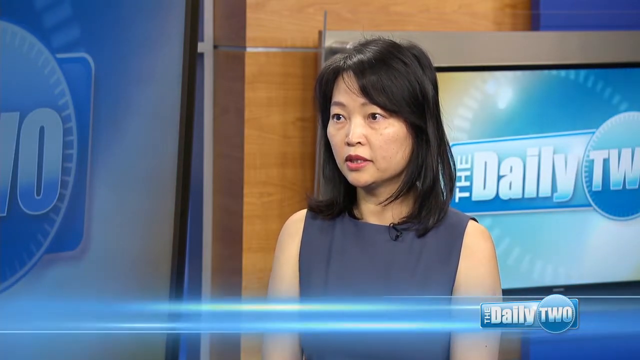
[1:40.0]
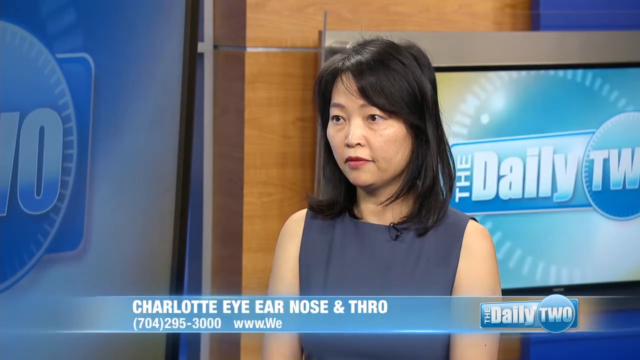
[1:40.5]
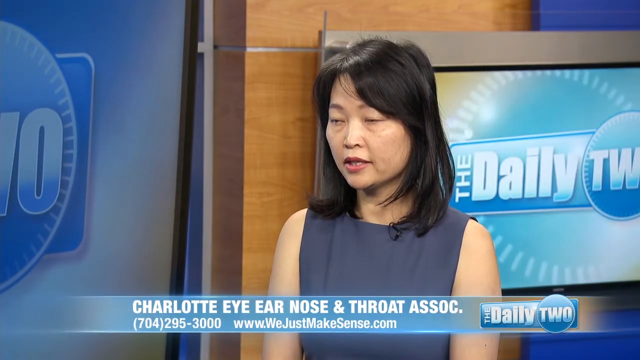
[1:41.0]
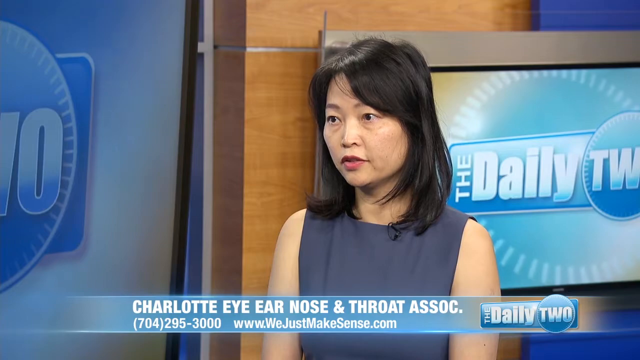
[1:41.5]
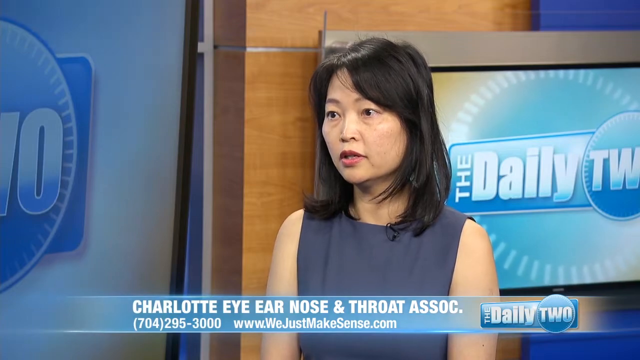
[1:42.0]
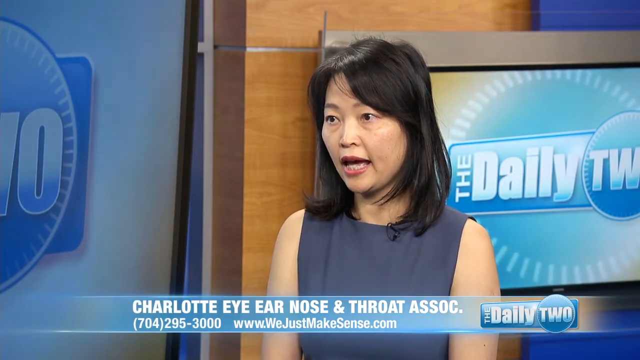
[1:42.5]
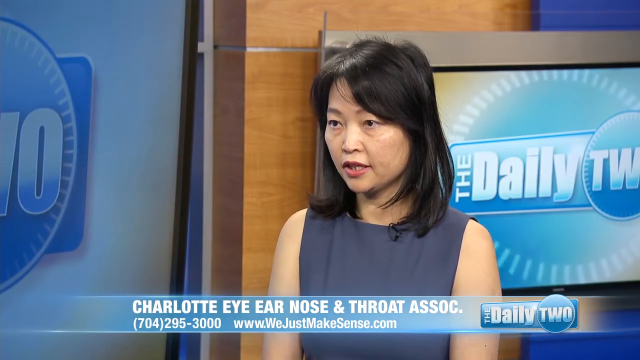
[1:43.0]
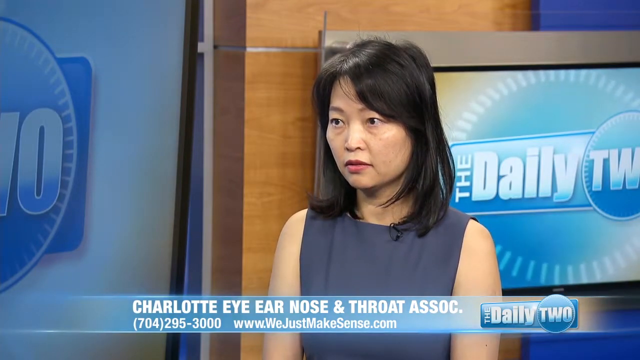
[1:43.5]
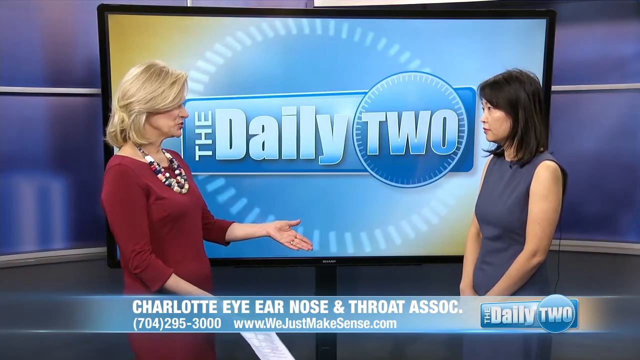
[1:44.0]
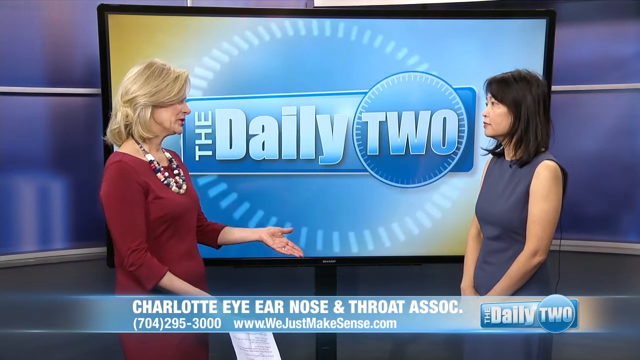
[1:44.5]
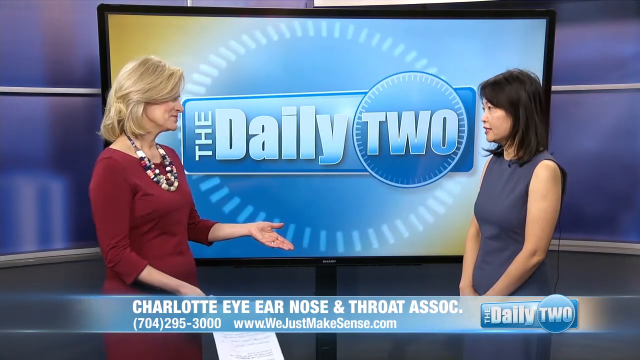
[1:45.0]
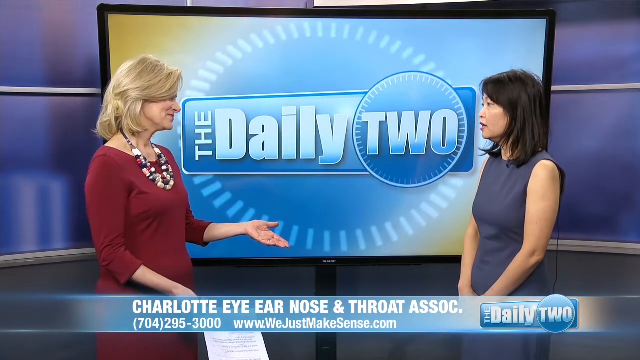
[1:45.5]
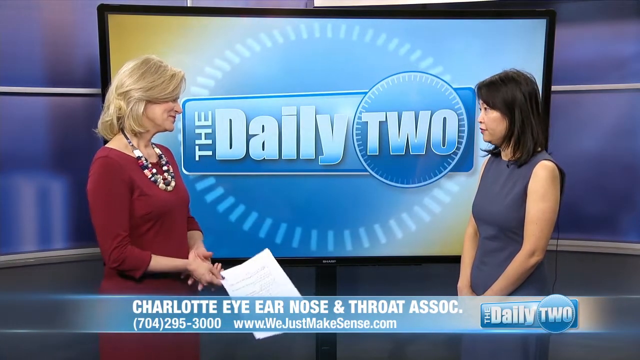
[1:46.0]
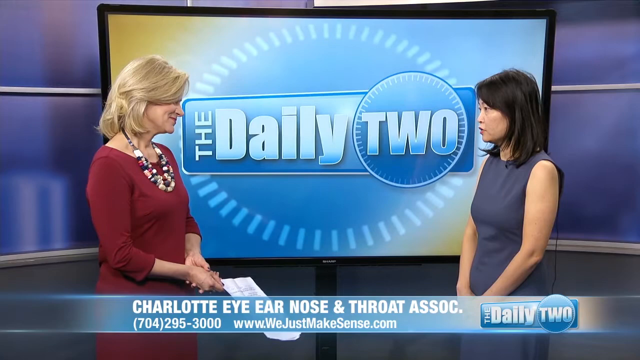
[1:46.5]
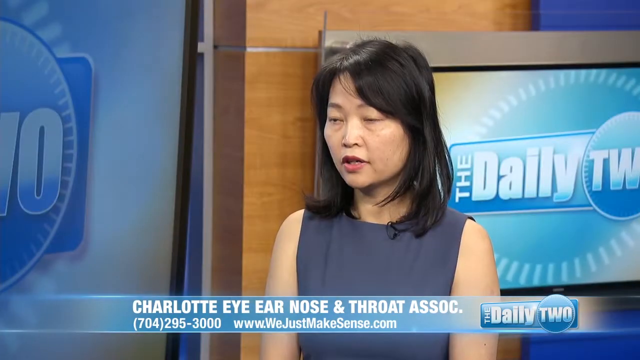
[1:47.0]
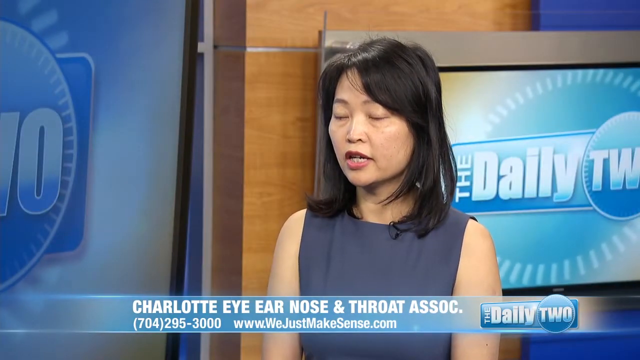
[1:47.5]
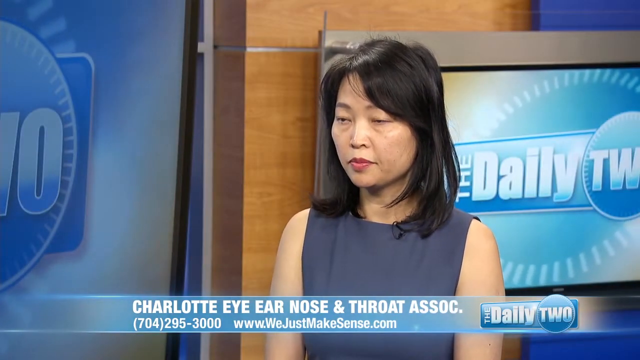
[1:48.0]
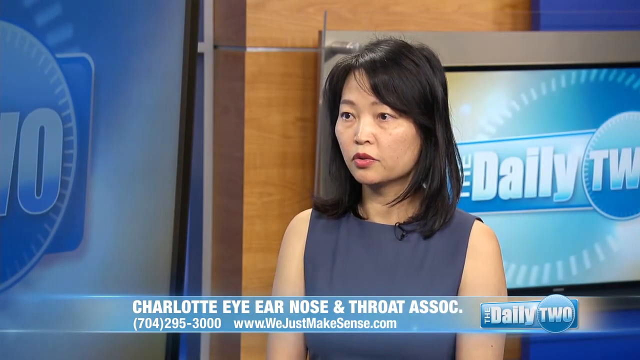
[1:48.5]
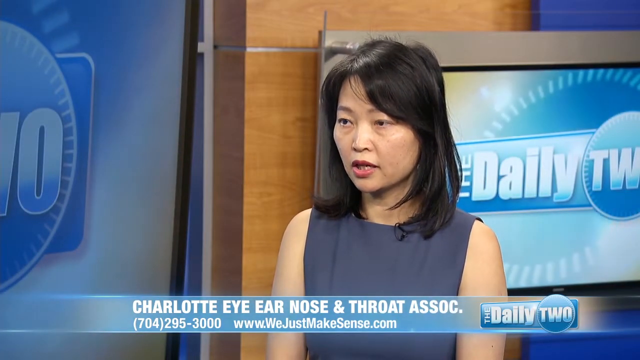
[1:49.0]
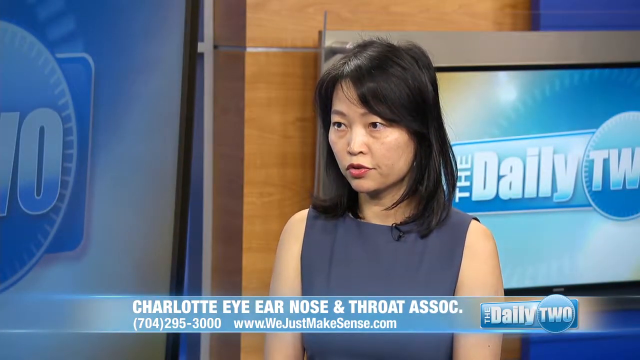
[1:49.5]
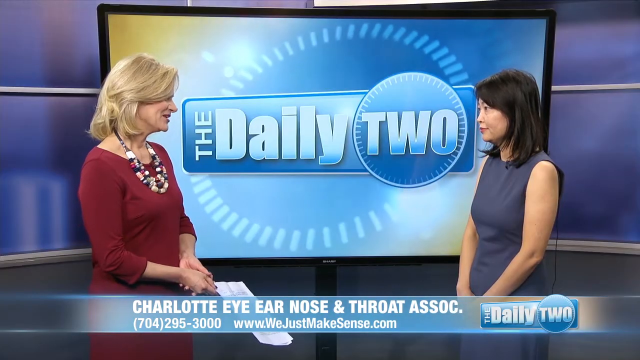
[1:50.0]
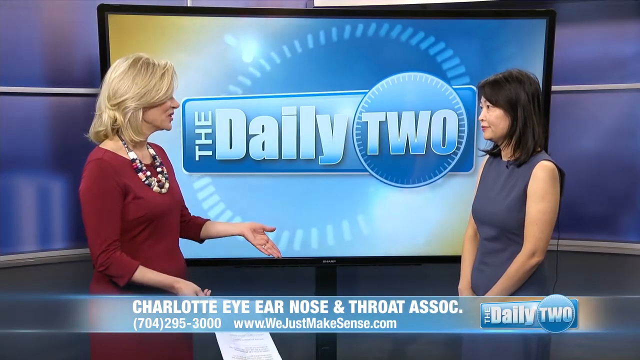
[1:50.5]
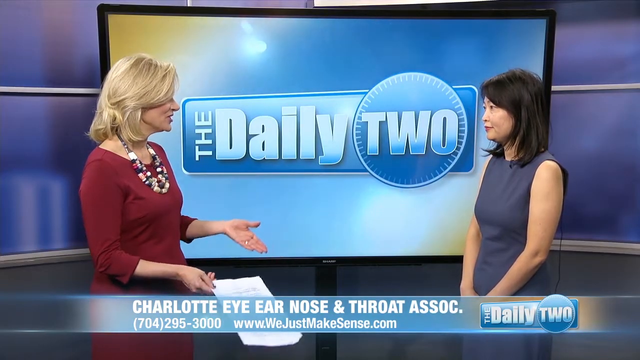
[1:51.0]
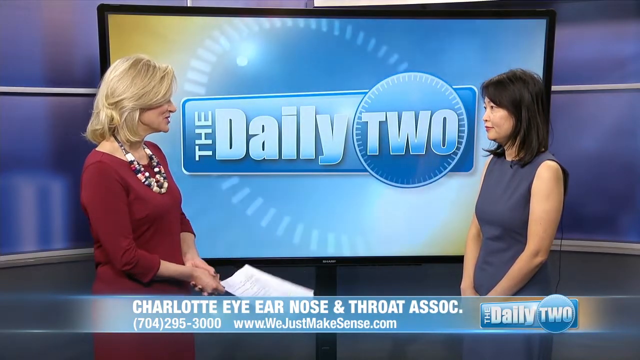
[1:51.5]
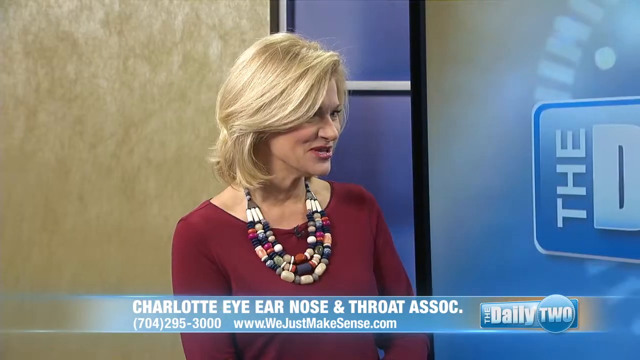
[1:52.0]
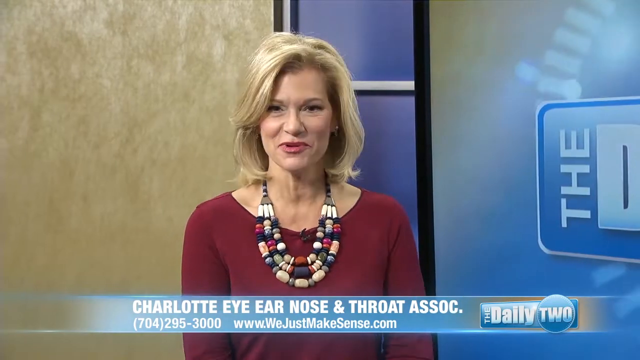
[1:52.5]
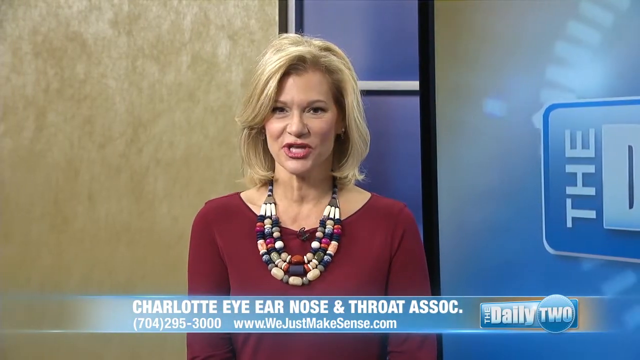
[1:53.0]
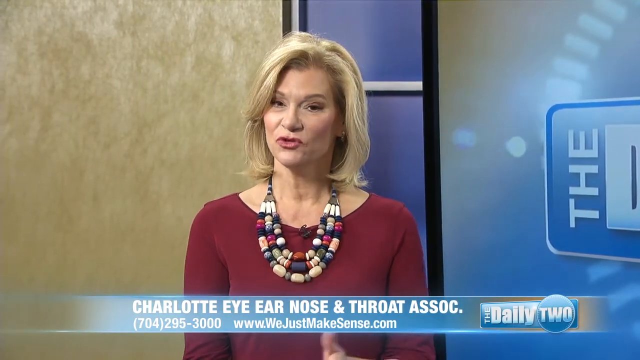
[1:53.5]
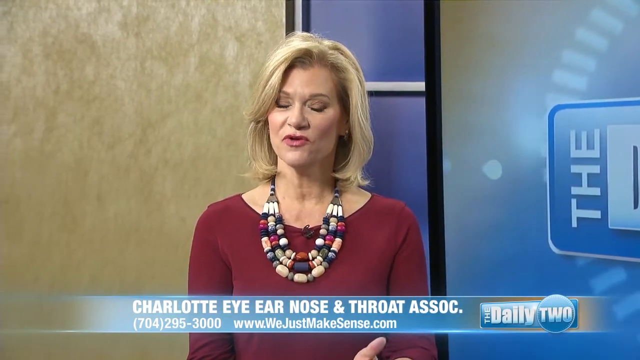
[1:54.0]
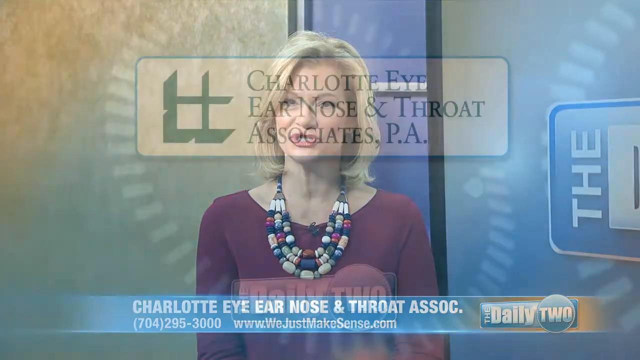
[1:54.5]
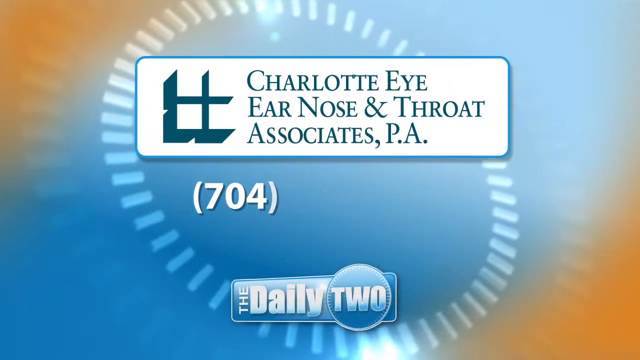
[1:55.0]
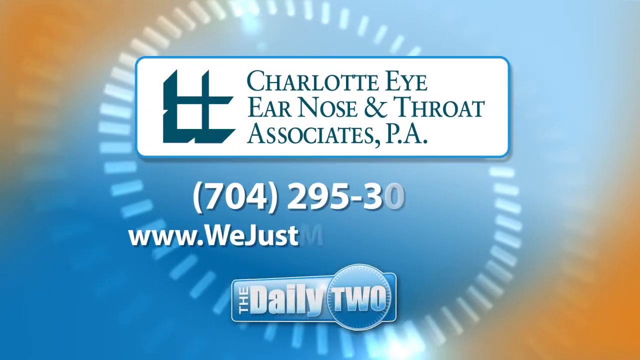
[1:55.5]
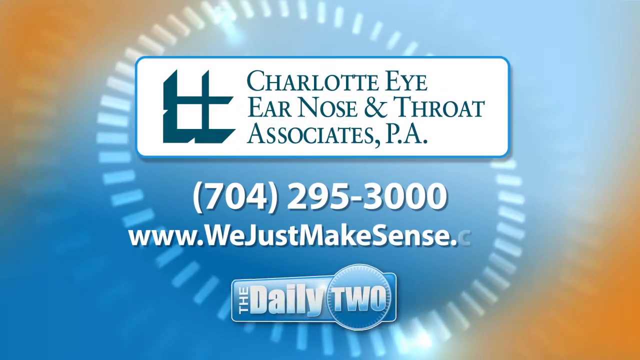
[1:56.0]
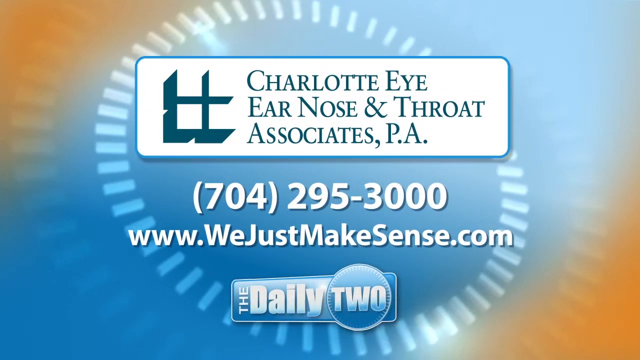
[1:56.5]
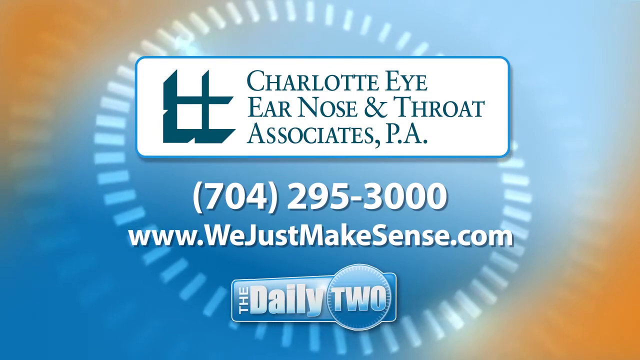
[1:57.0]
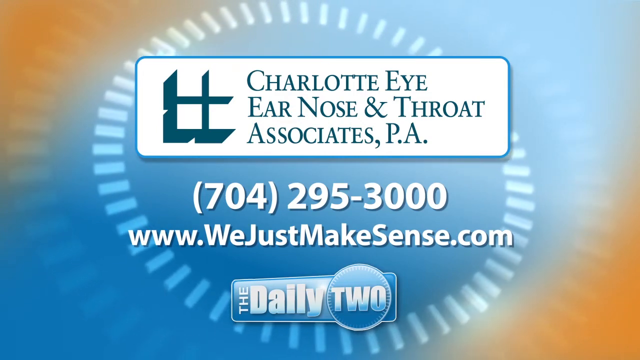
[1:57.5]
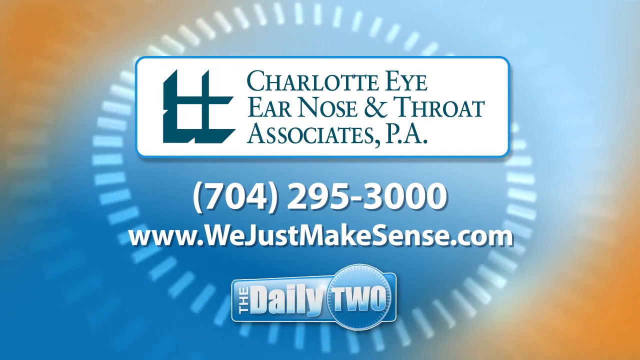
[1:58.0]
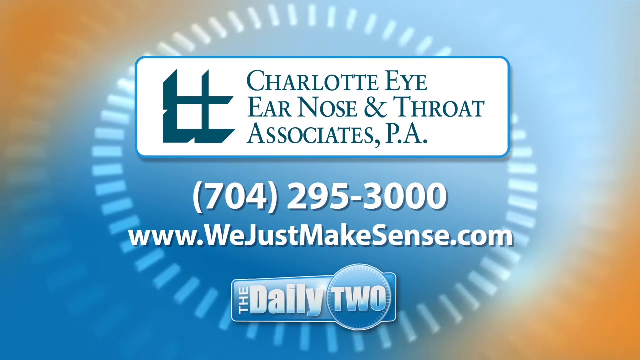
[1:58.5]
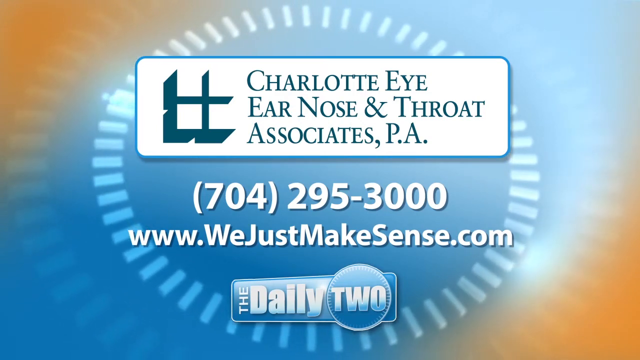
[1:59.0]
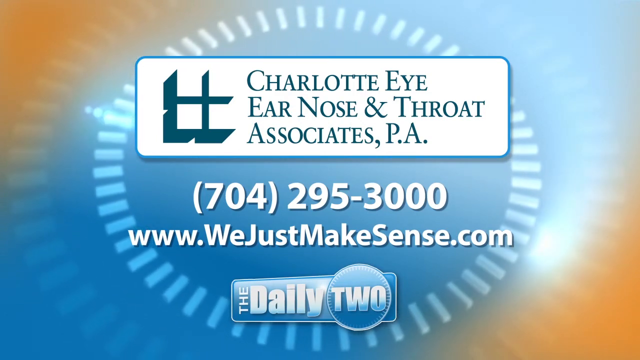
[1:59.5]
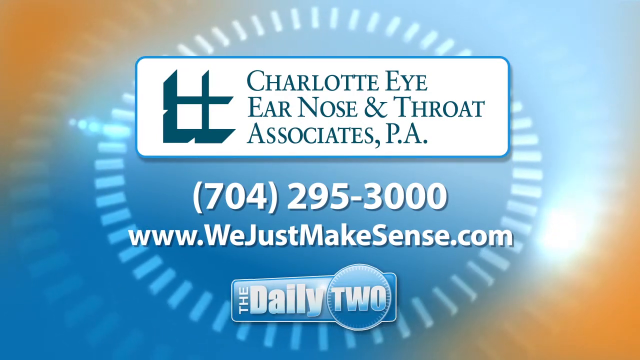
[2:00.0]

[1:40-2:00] The woman in the gray sleeveless dress is still talking. Behind her is a monitor that says "the Daily 2", on the left side of the screen. Text names Charlotte Eye Ear Nose and Throat with "ASSOC.", the number "(704) 205-3000", and the website "www.wejustmakesense.com". At the end there is a white rectangle with a blue border, with green text reading "Charlotte Eye Ear Nose and Throat" and ", P.A.", and white text giving the number "704-295-3000" and the website "www.wejustmakesense.com".